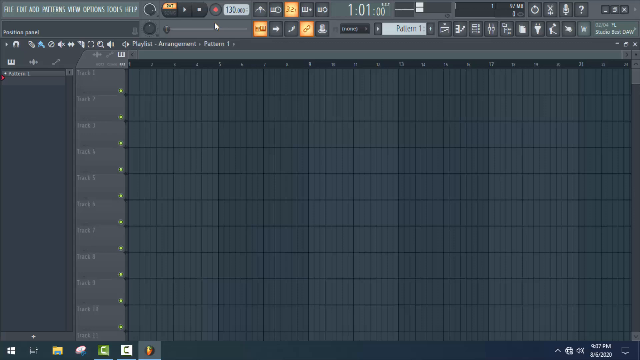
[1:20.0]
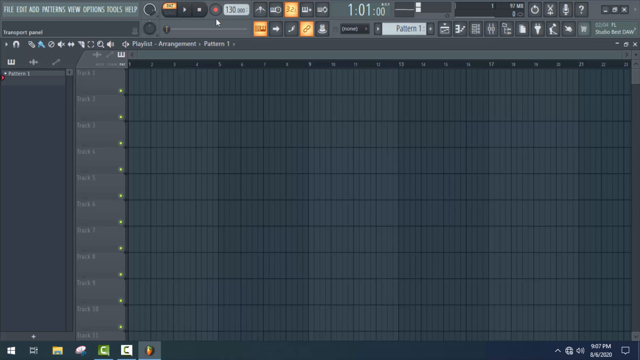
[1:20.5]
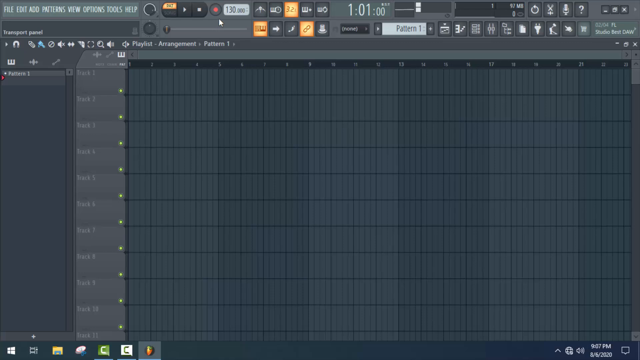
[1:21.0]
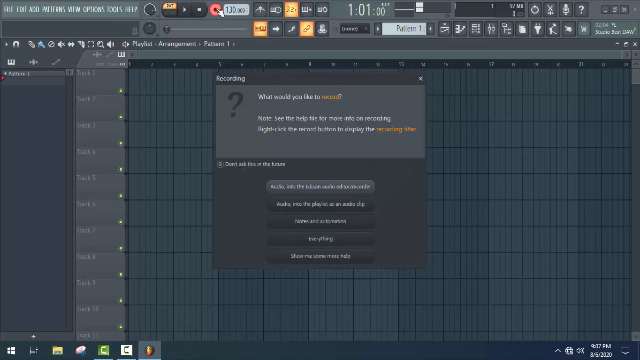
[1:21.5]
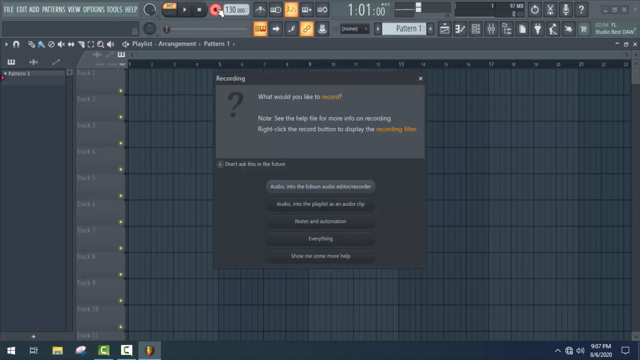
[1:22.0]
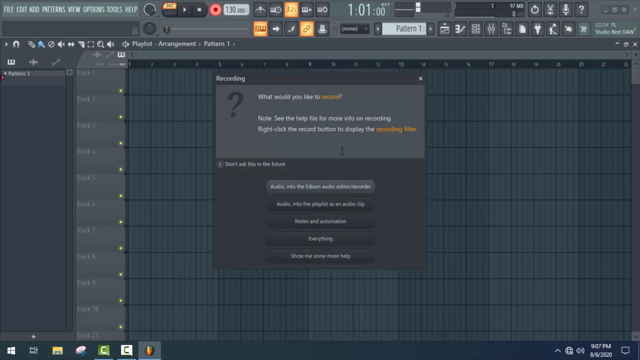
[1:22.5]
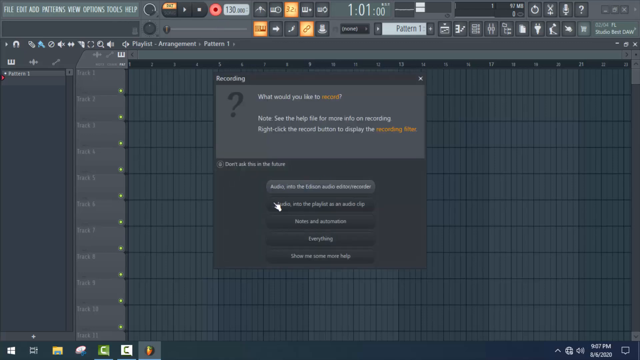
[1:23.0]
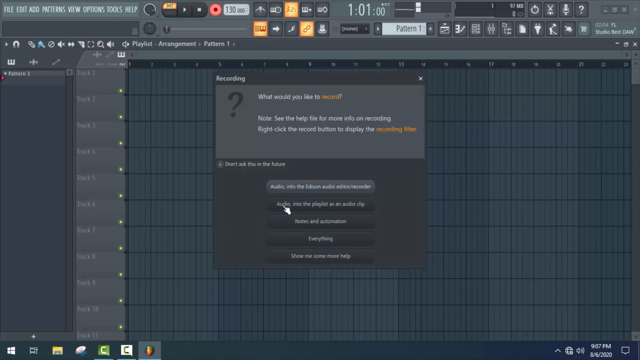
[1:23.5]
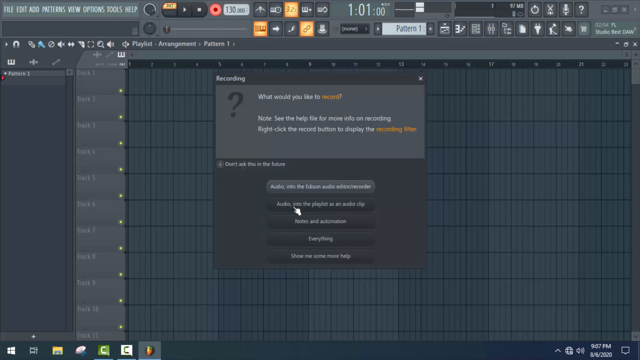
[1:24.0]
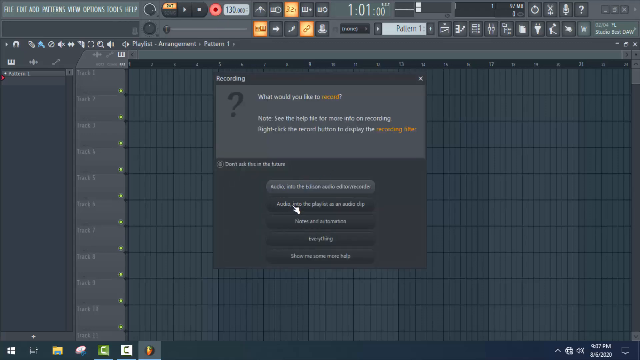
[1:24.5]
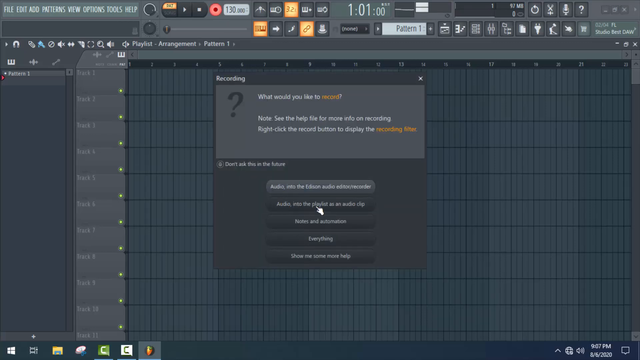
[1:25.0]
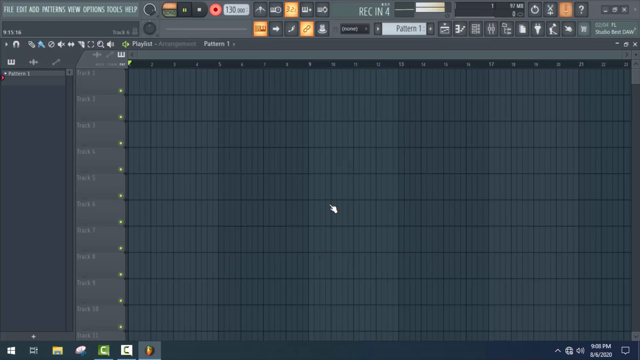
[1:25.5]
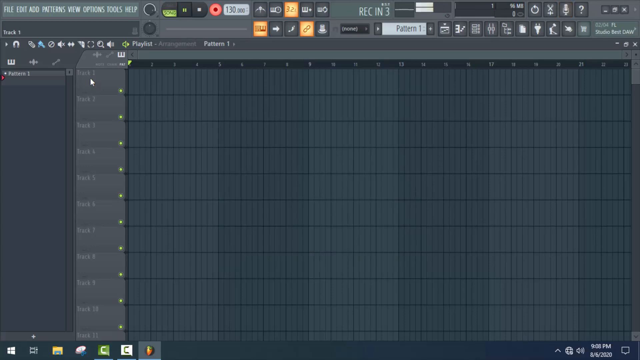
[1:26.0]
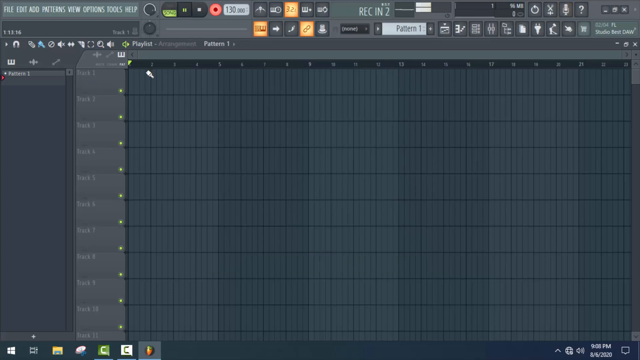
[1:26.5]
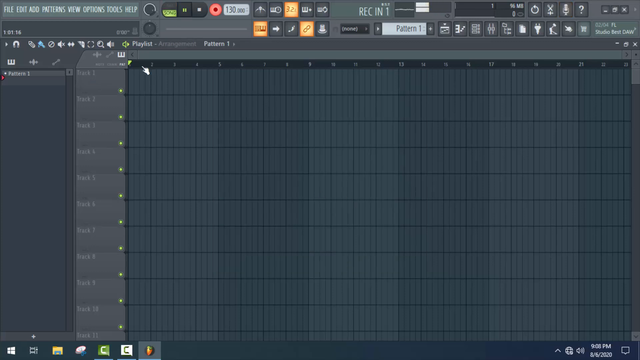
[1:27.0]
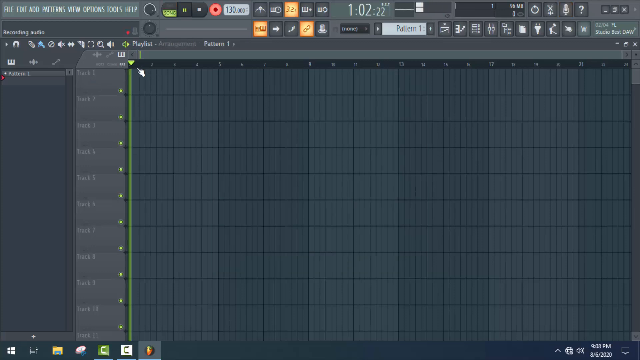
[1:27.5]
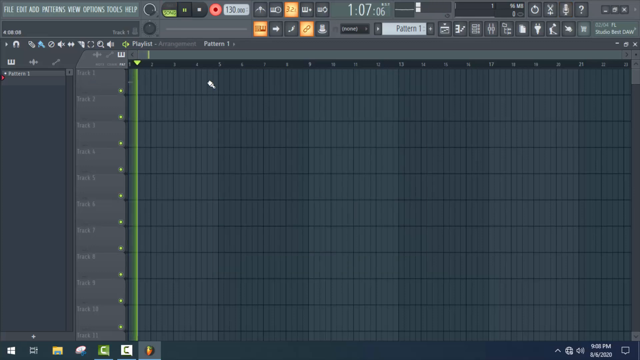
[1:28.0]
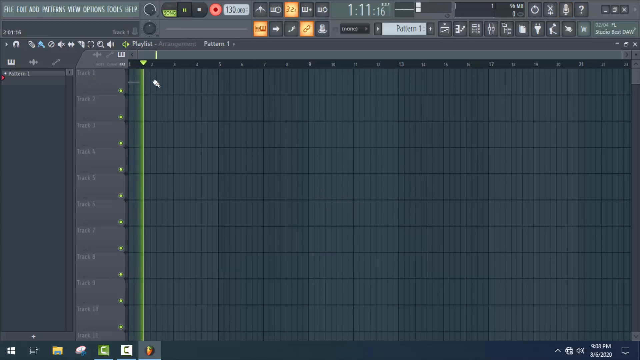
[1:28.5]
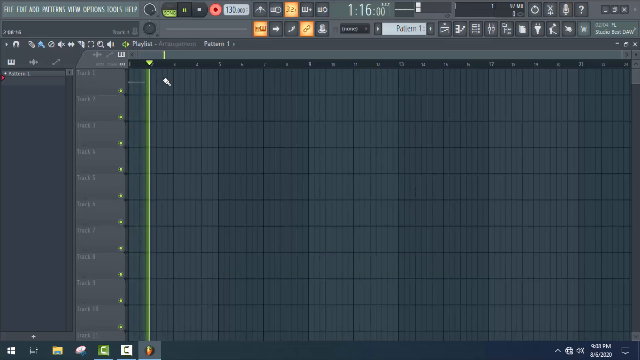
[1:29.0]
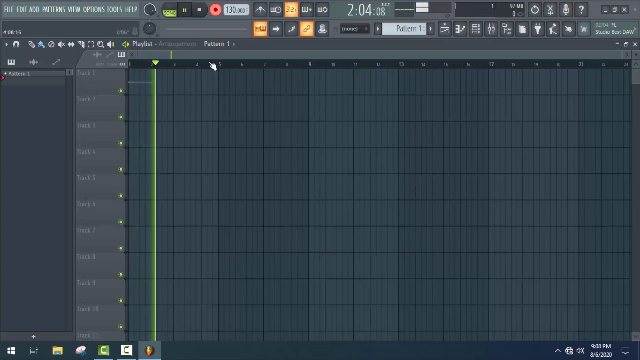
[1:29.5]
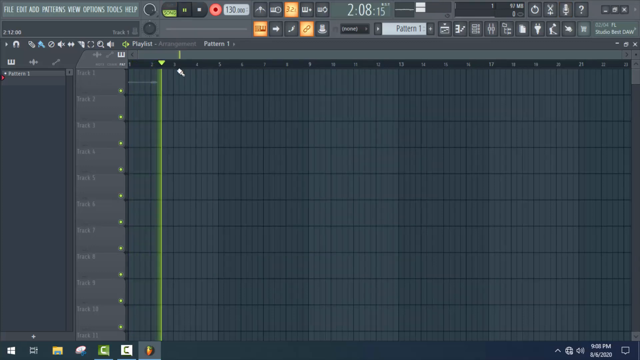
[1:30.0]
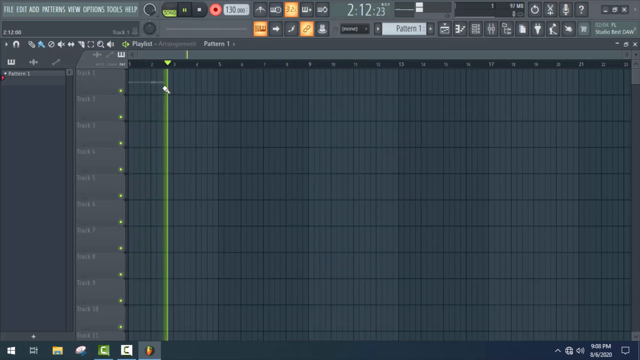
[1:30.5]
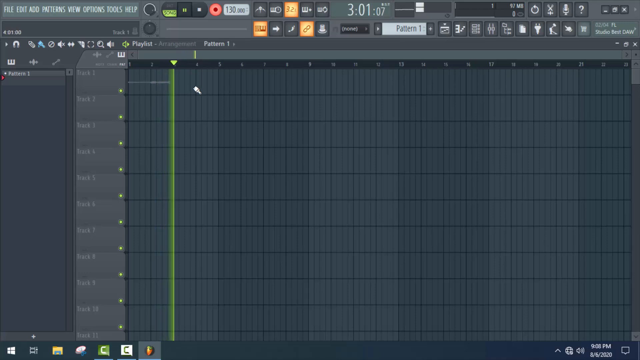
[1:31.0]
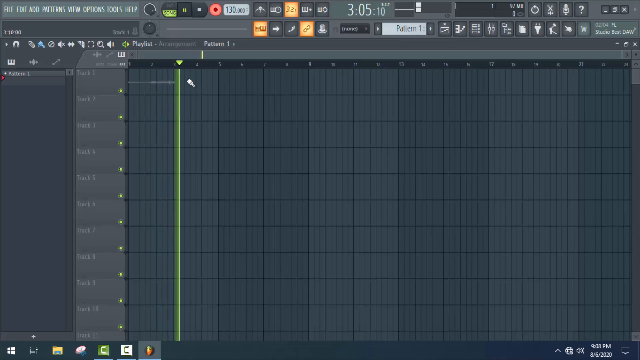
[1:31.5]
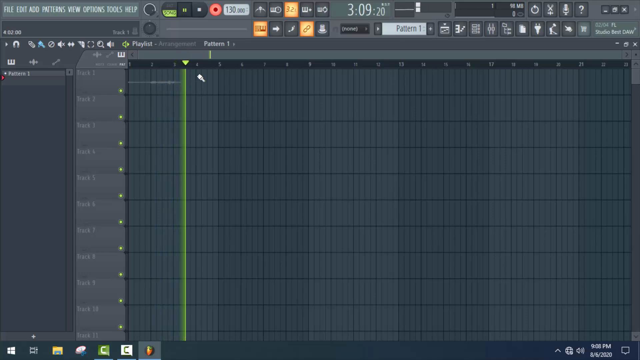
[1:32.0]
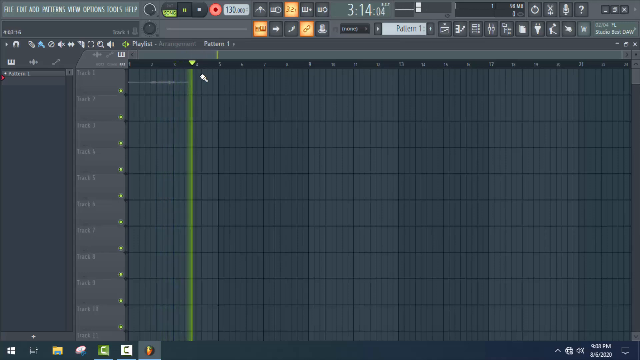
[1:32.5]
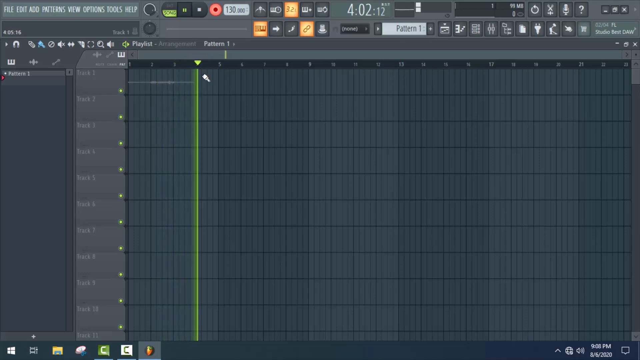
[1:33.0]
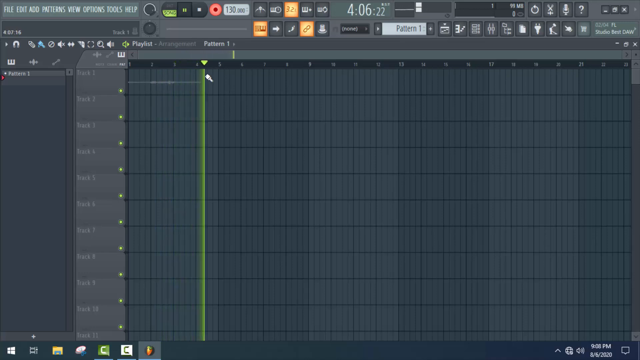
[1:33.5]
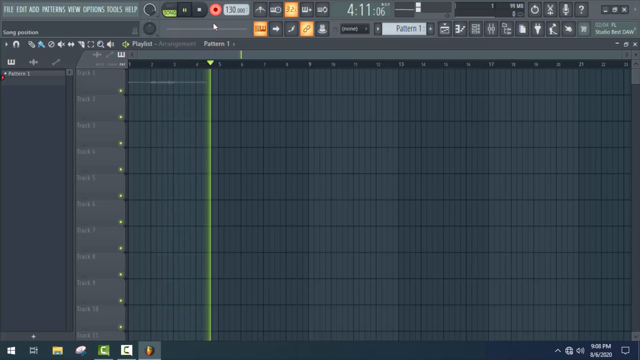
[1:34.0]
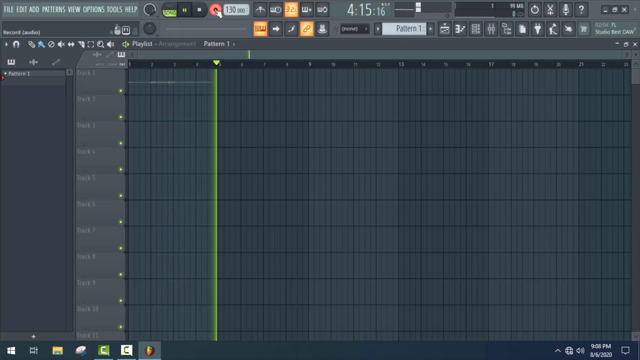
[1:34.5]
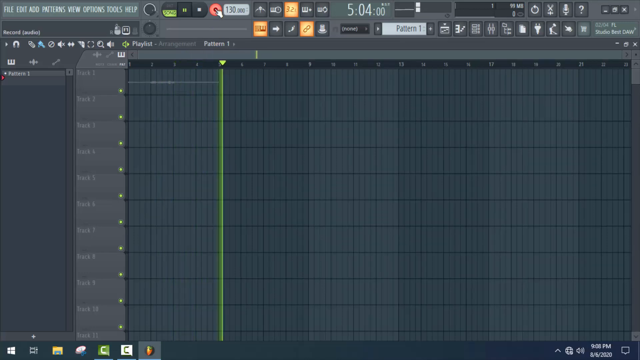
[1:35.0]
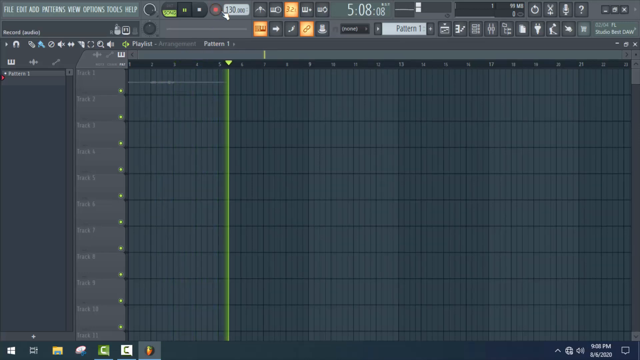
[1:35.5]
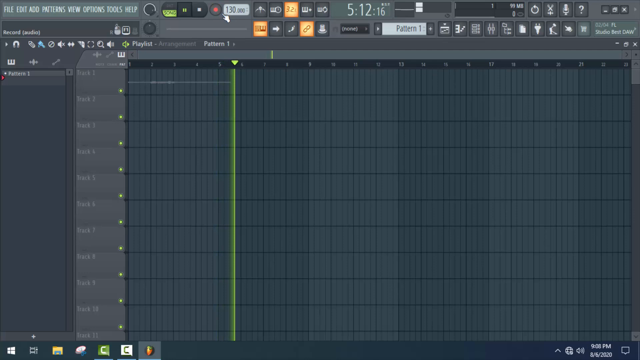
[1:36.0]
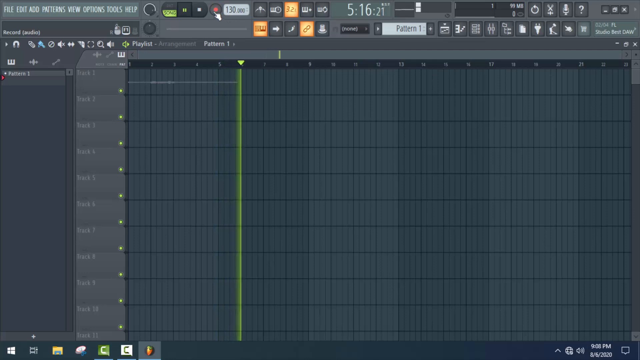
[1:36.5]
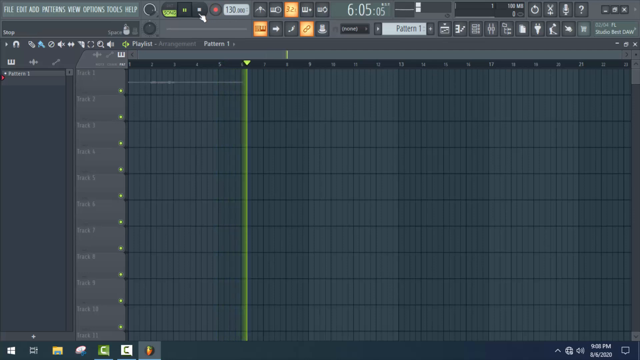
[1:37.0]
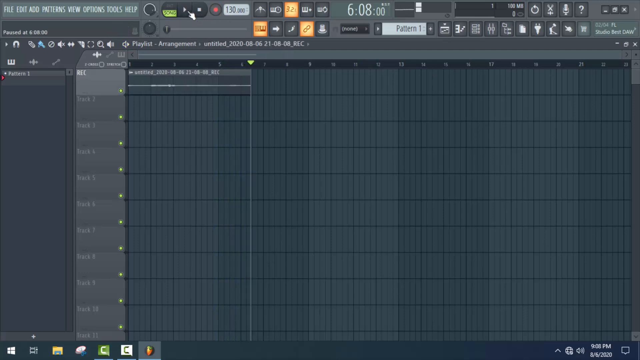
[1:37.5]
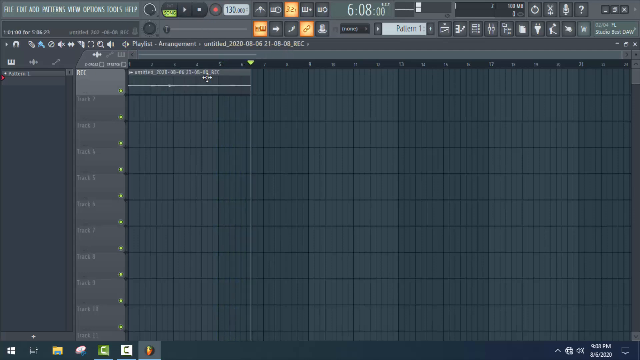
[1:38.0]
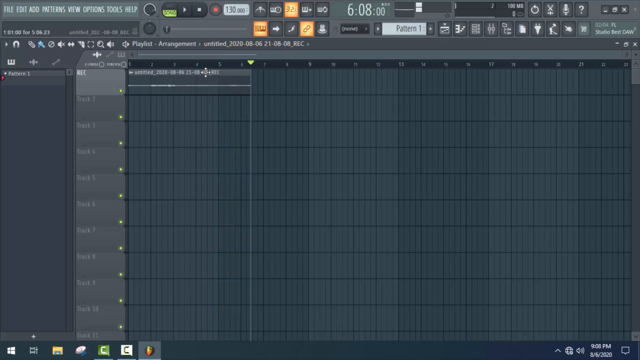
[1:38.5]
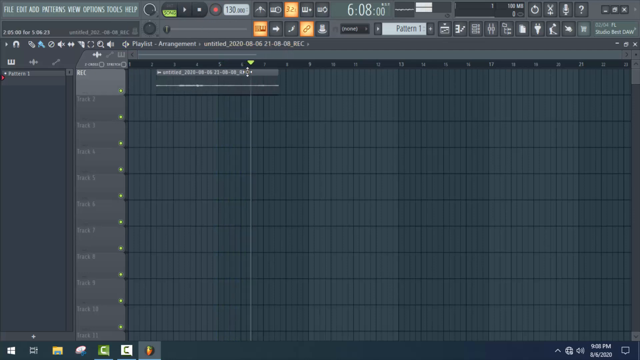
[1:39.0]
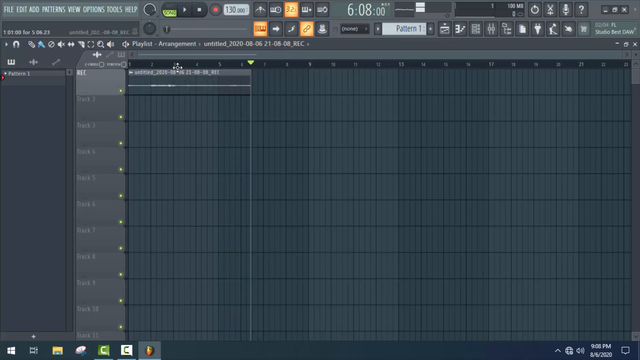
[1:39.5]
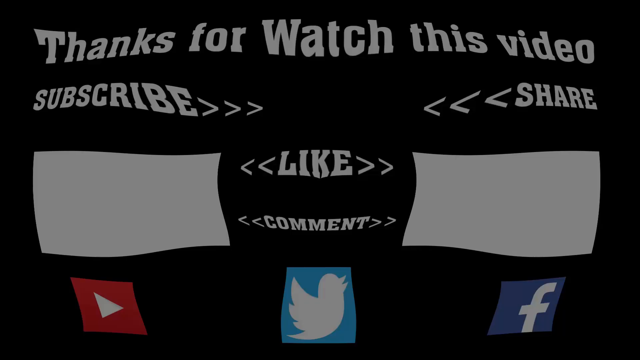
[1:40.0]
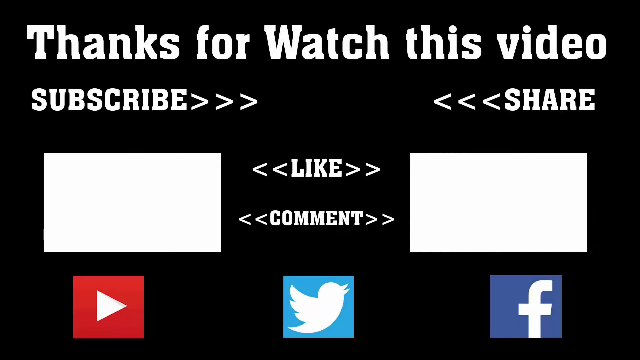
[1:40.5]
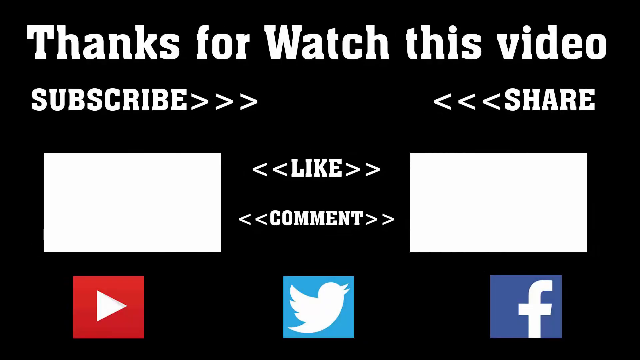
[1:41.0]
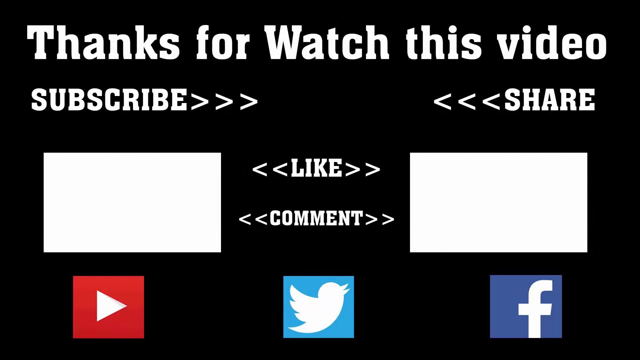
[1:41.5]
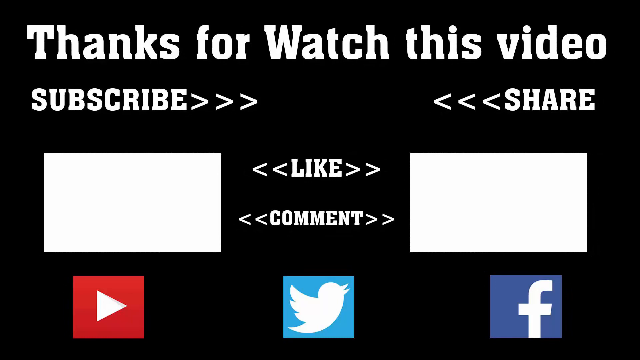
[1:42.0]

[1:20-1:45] He moves the cursor around, showing various things in the software, and seems to be recording a new segment of audio. The video then ends on an end page reading "thank you for watching this video", with "subscribe", "share", "like" and "comment" placed in different spots on a black image along with YouTube, Facebook and Twitter symbols.